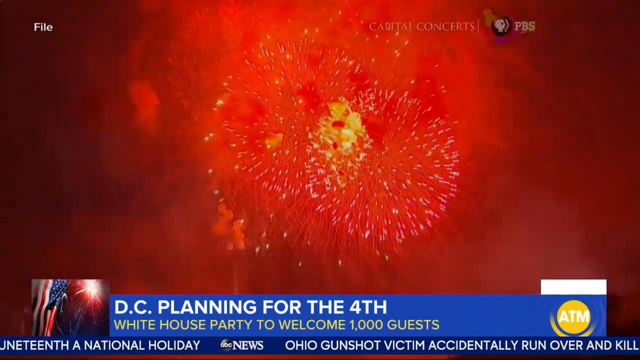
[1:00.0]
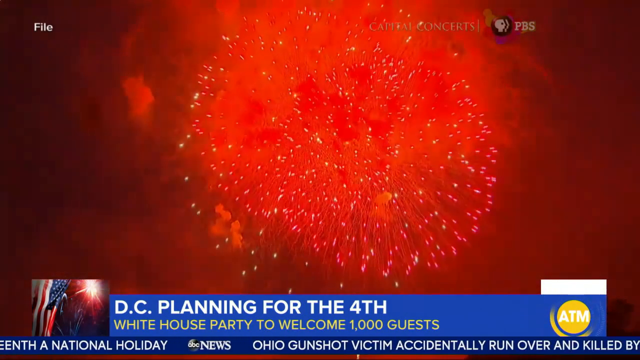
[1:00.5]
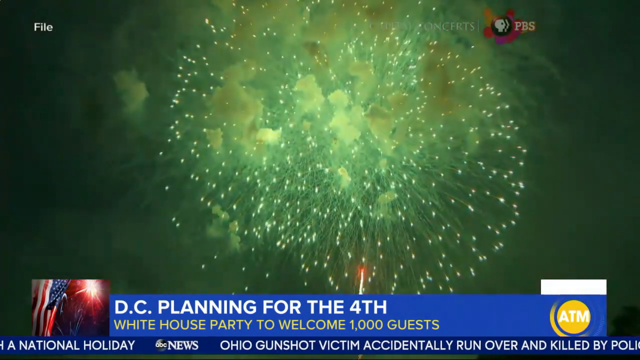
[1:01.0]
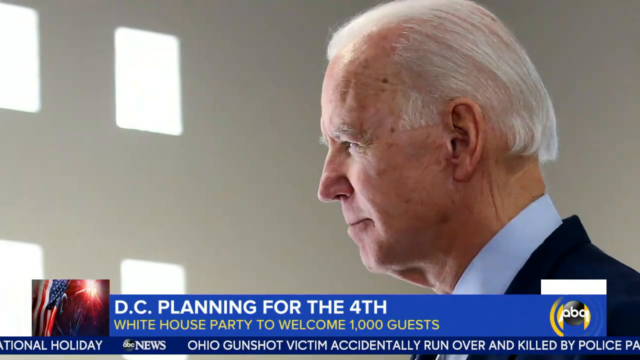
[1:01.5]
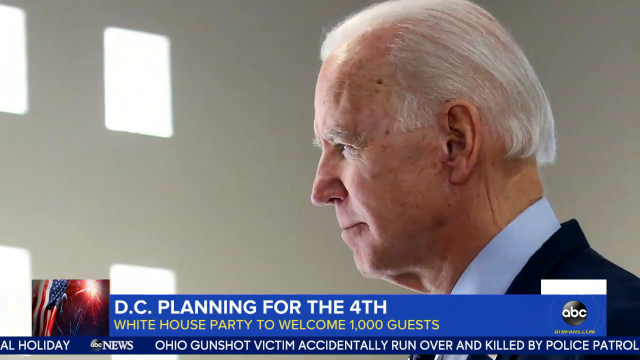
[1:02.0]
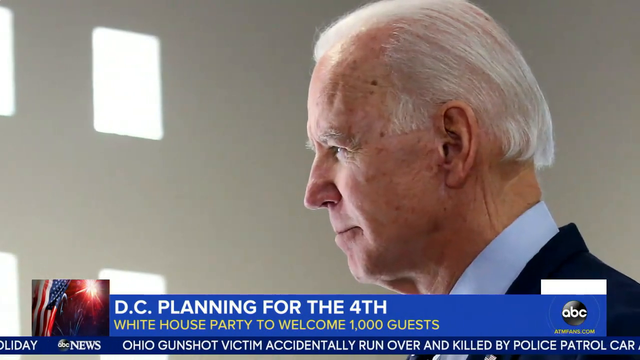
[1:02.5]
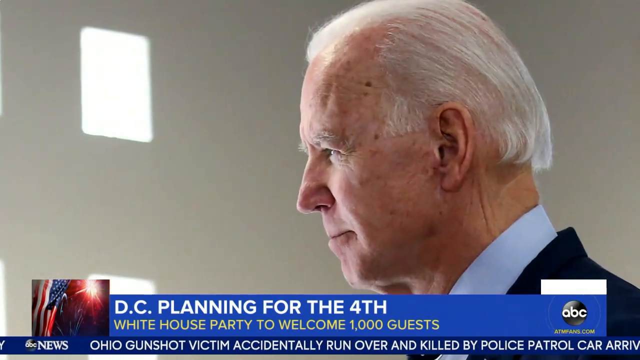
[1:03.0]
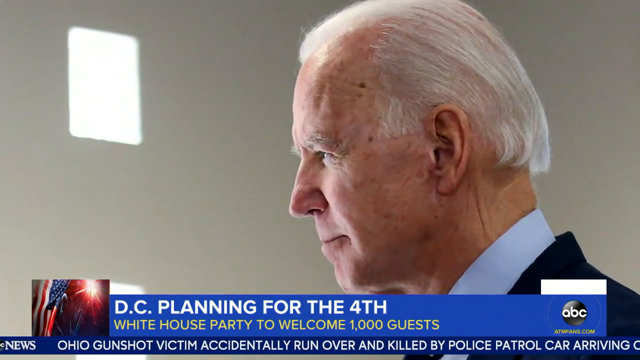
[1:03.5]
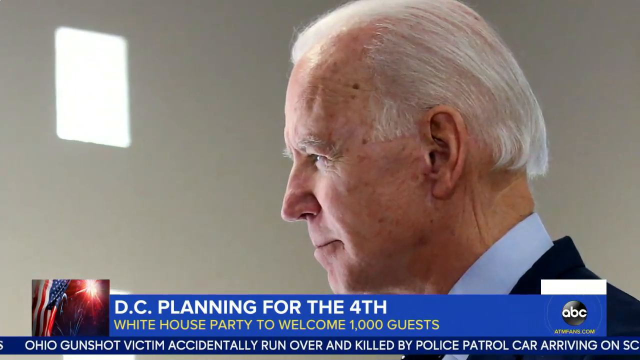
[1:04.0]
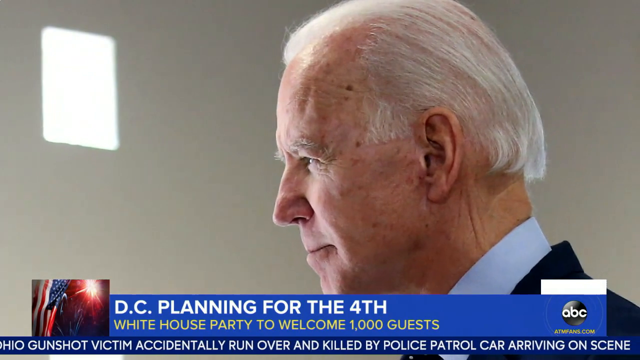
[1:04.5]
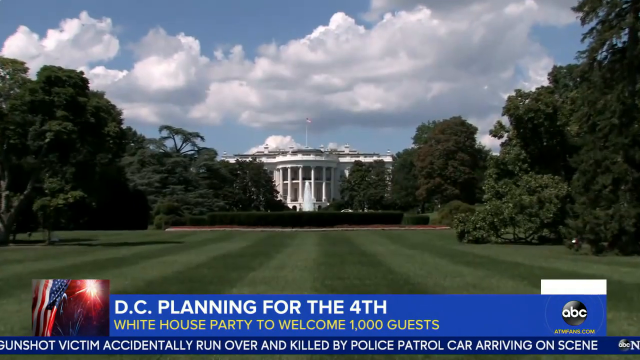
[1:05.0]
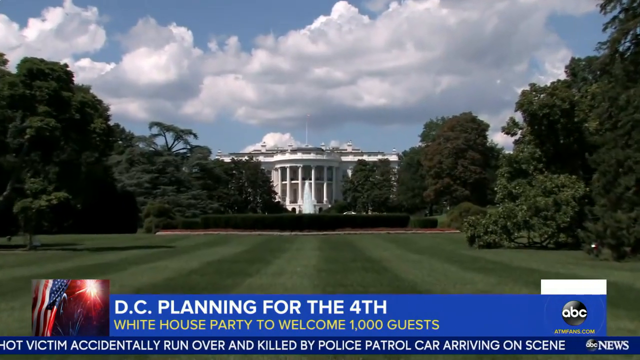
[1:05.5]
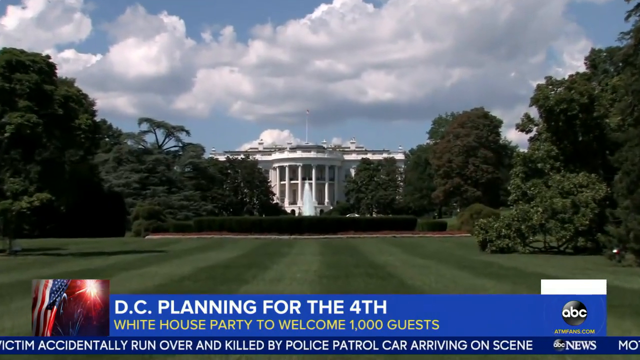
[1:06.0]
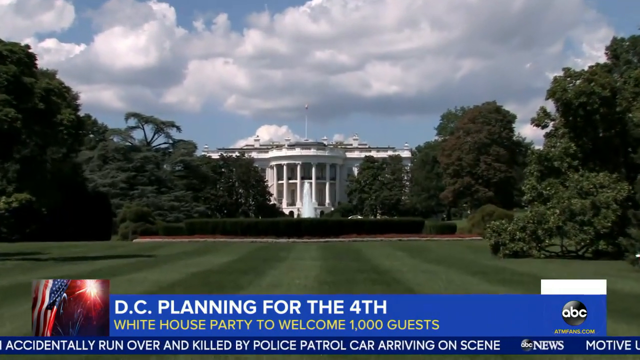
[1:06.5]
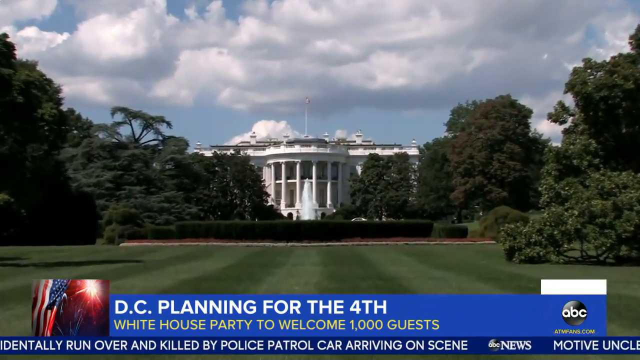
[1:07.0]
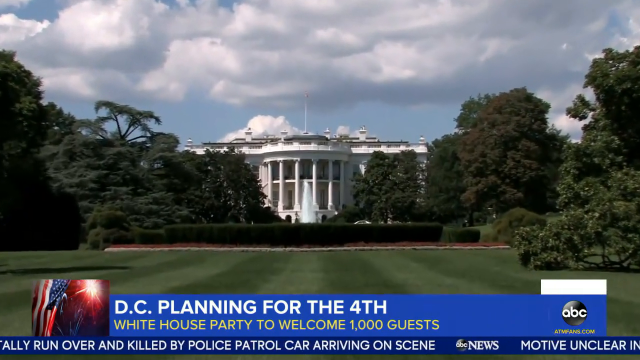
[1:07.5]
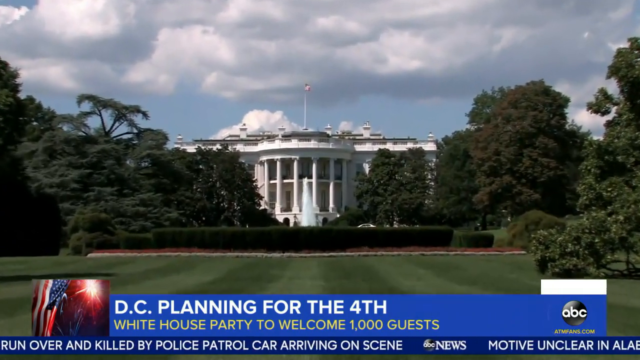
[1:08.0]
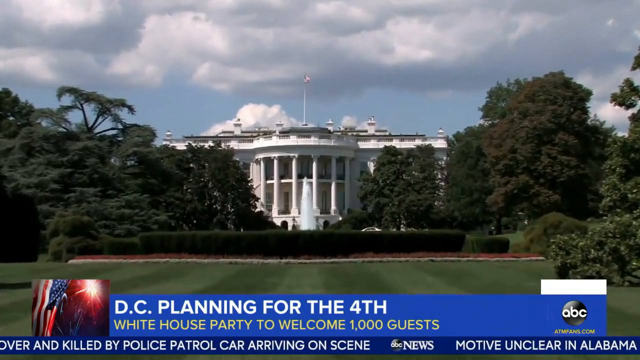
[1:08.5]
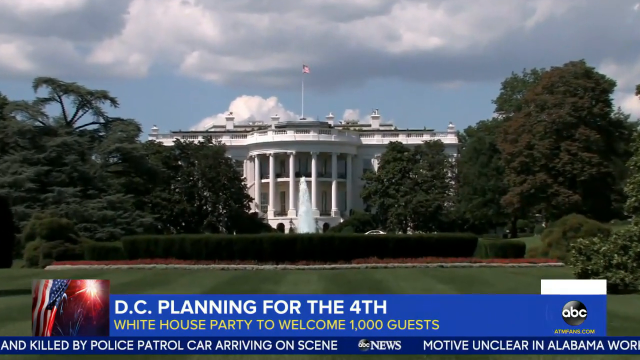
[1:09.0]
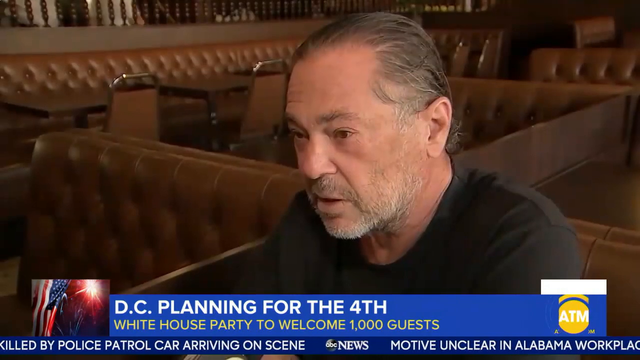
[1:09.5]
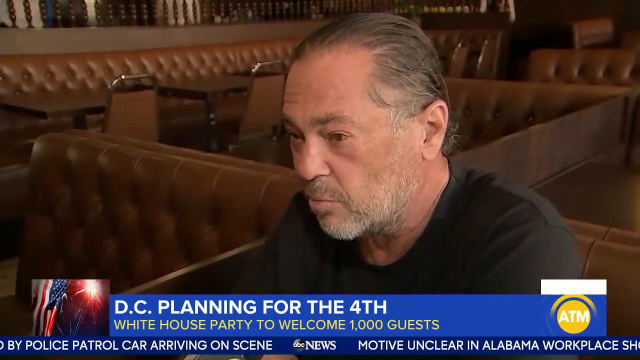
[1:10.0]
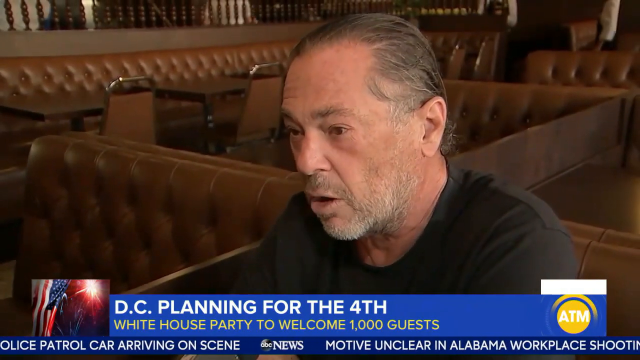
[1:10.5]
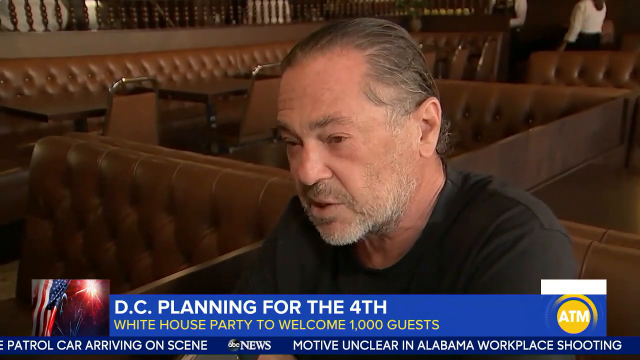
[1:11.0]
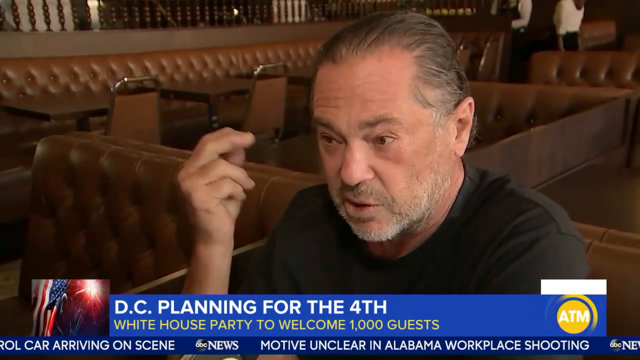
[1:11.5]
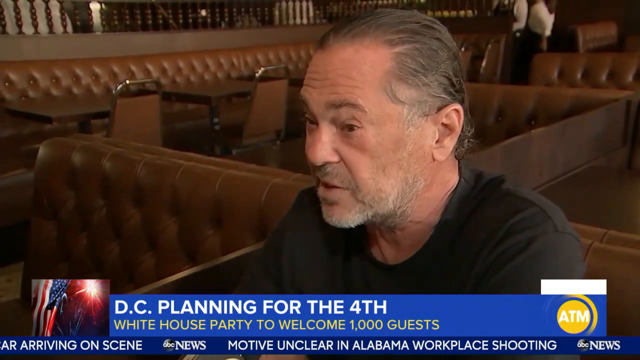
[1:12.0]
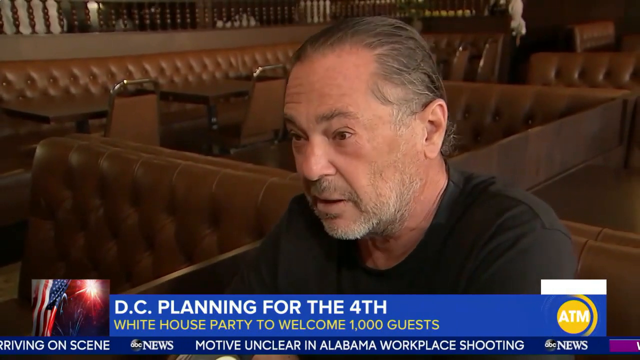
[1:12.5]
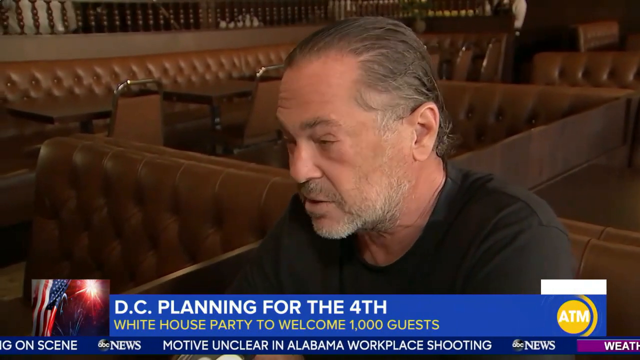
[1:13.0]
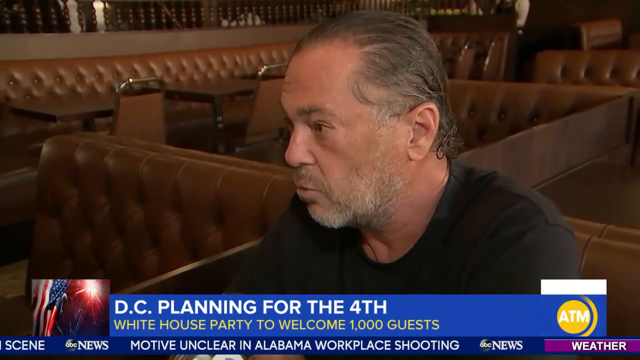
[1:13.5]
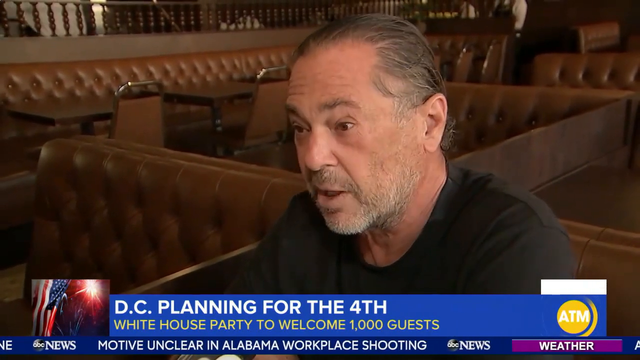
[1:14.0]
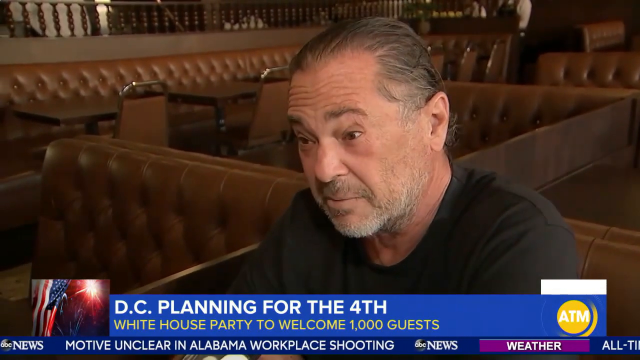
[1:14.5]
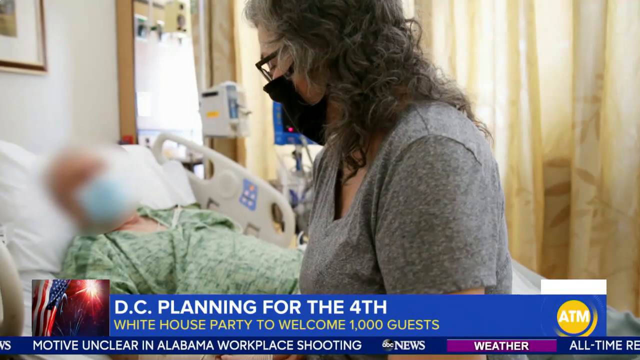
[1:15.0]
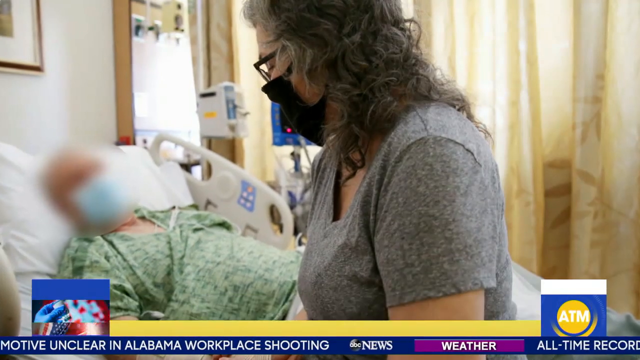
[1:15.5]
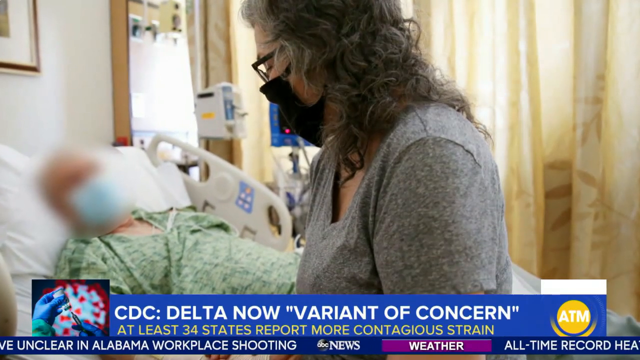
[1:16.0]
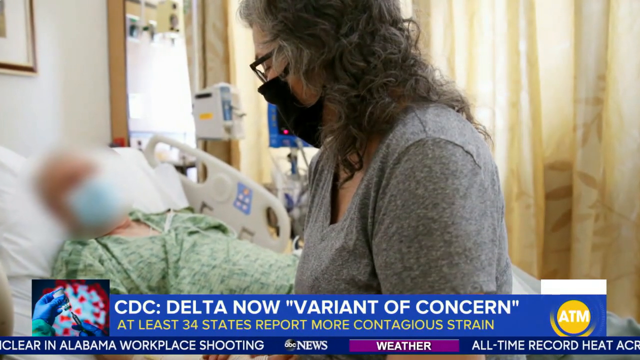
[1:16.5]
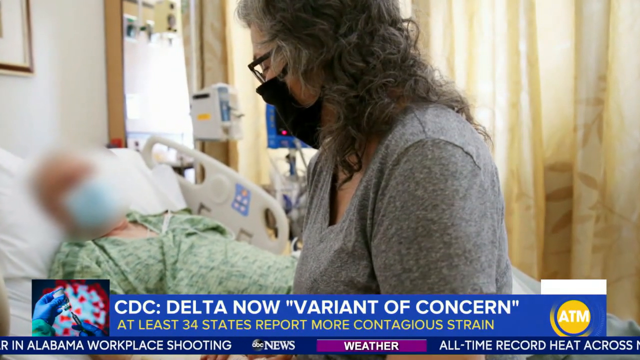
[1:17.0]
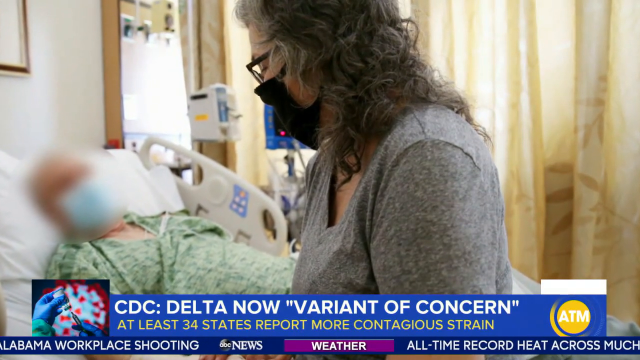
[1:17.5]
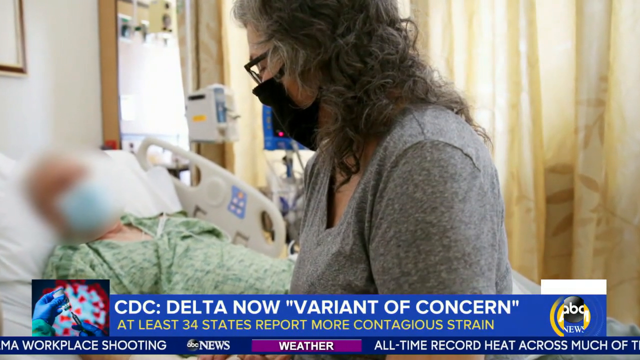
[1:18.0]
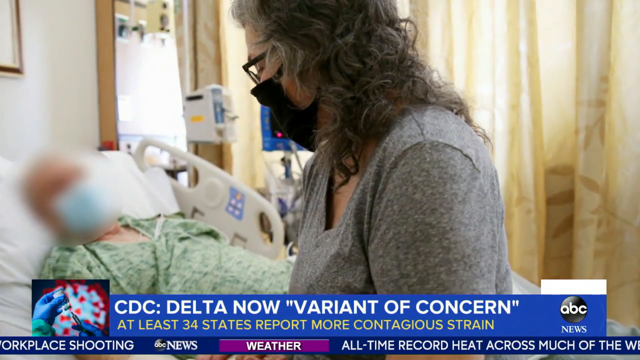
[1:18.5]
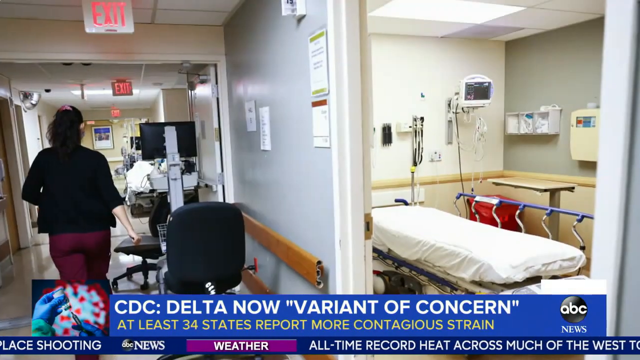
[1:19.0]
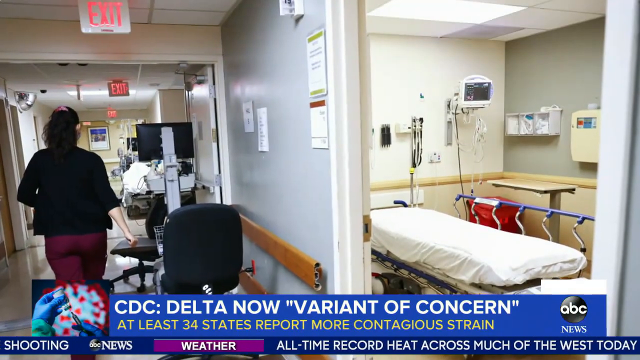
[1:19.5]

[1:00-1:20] The sky is covered in red fireworks, and underneath is blue-white text reading "D.C. planning for the 4th." As the fireworks continue to explode, a monument is visible in the foreground along with white smoke at the bottom of the screen. The video cuts to an image of Joe Biden staring, on the left side of the screen, and then to an image of the White House showing the front lawn with trees on each side and a water fountain in the middle. Next, a man in a black shirt seems to be sitting in a brown booth in a restaurant and appears to be talking to somebody off camera. The video then cuts to a person named Don Osborne Ben wearing a green gown, with a person in the foreground who seems to be standing next to someone in a gray blouse and a black mask. It then cuts to an empty hospital bed, with a nurse walking down the hall on the left side.